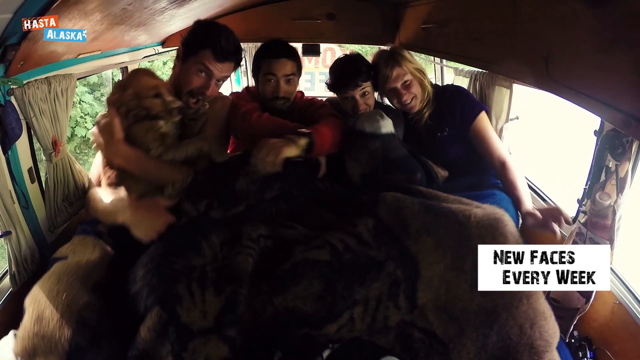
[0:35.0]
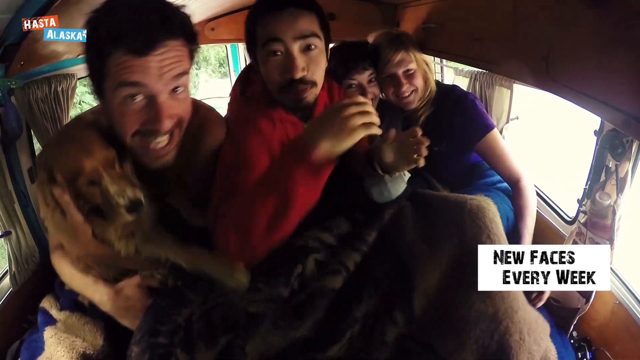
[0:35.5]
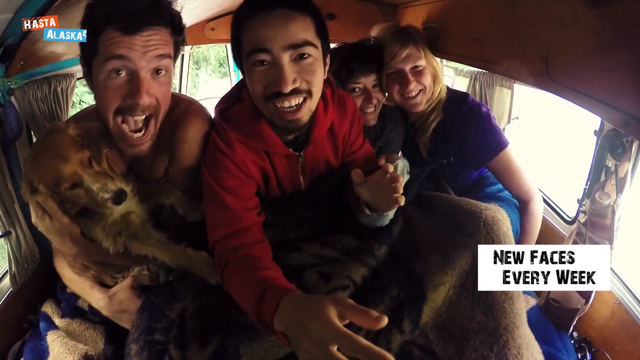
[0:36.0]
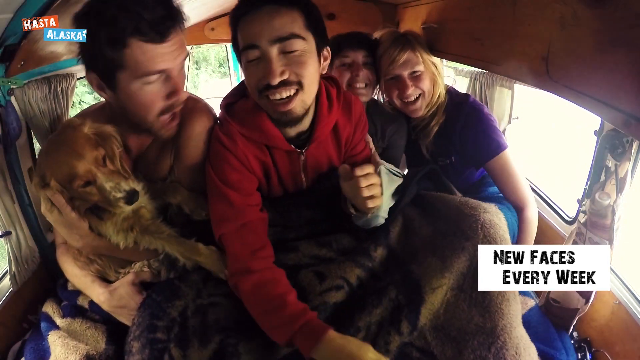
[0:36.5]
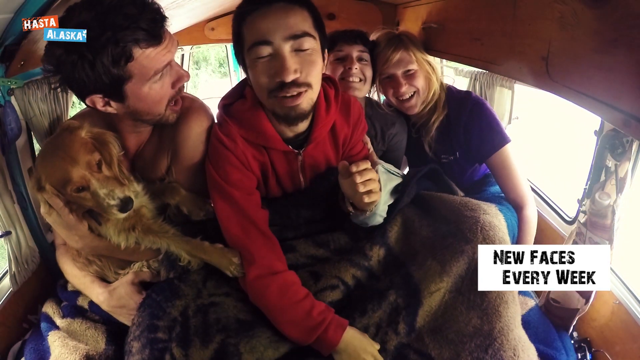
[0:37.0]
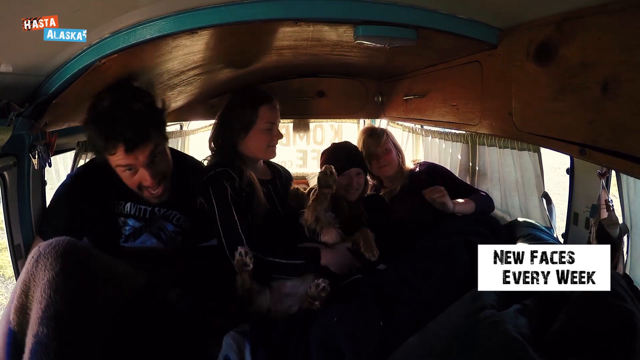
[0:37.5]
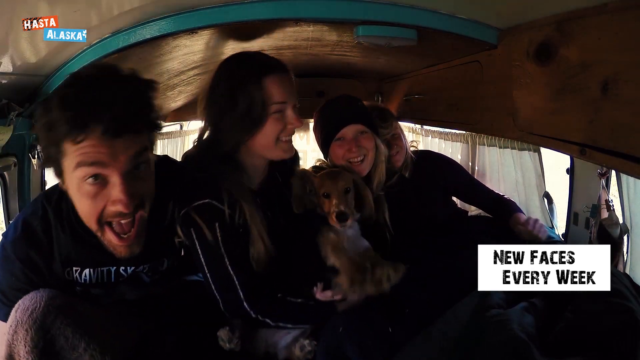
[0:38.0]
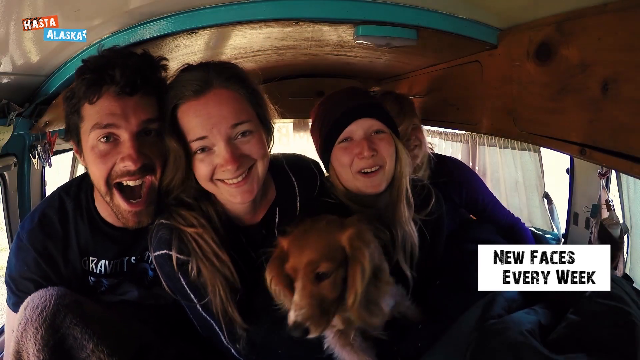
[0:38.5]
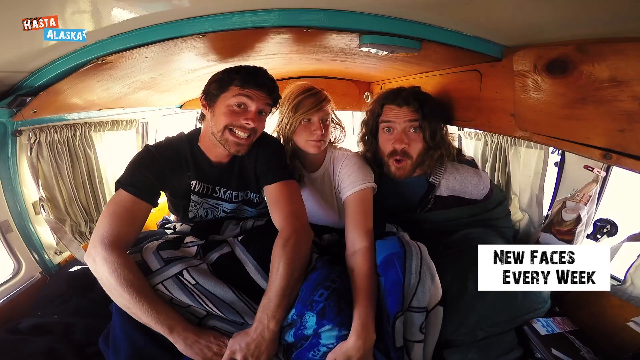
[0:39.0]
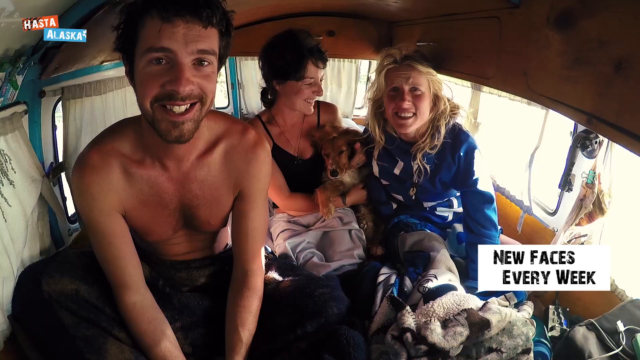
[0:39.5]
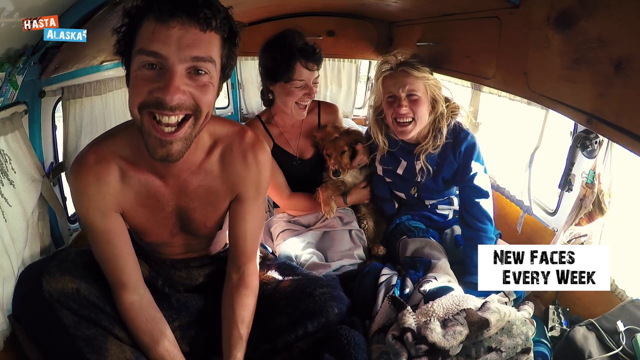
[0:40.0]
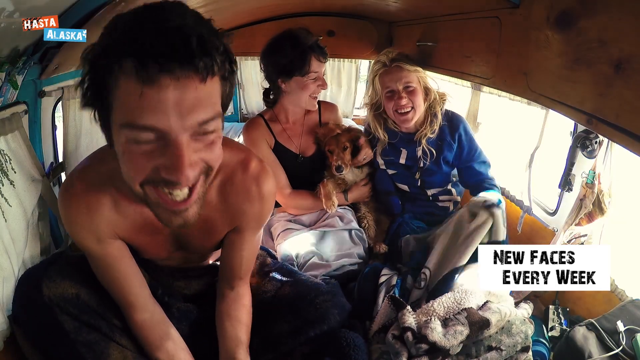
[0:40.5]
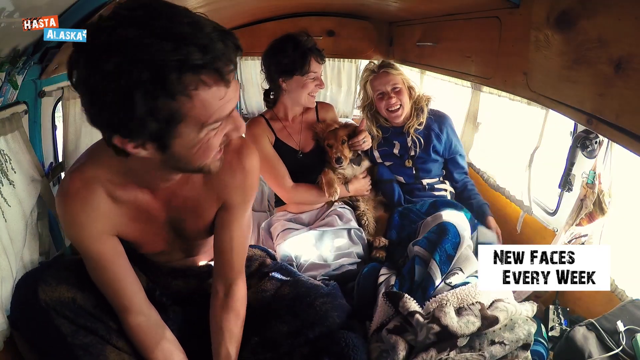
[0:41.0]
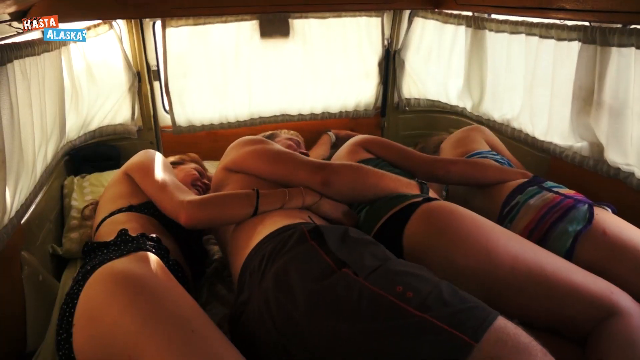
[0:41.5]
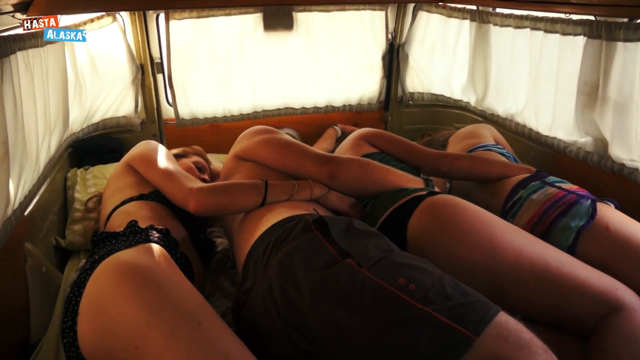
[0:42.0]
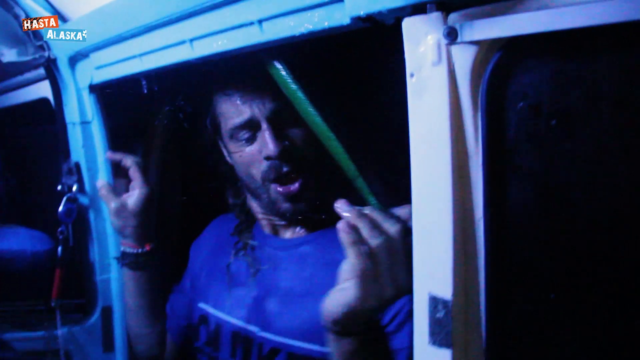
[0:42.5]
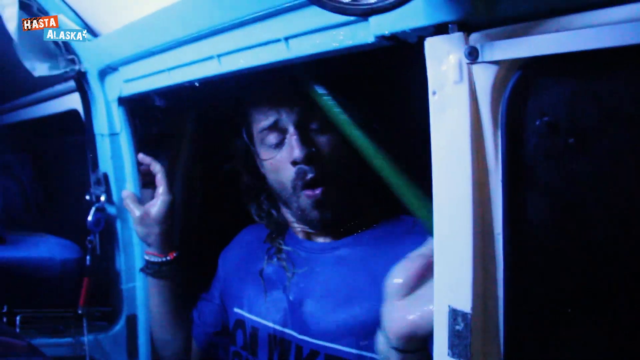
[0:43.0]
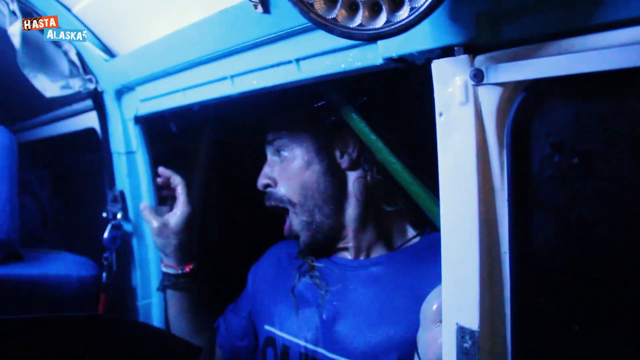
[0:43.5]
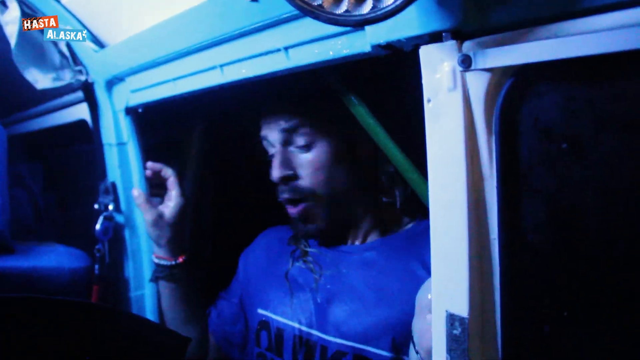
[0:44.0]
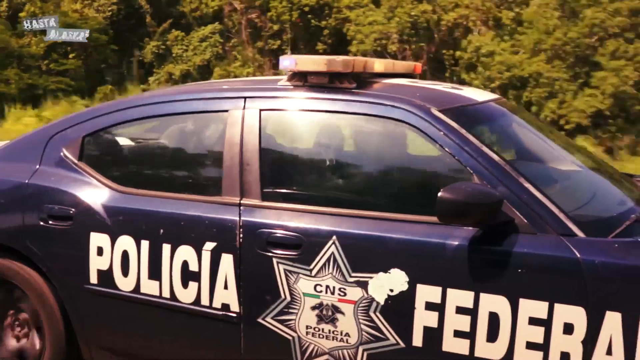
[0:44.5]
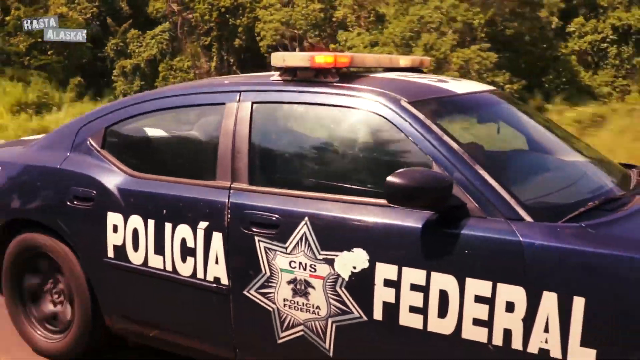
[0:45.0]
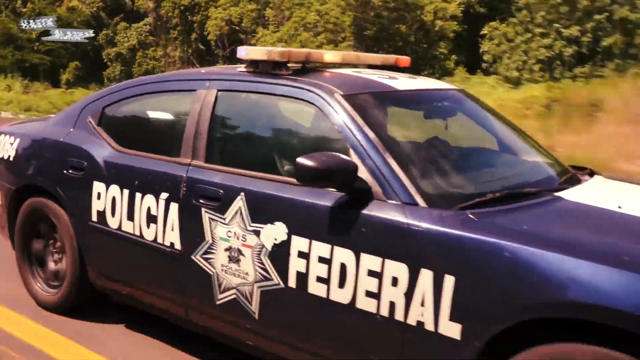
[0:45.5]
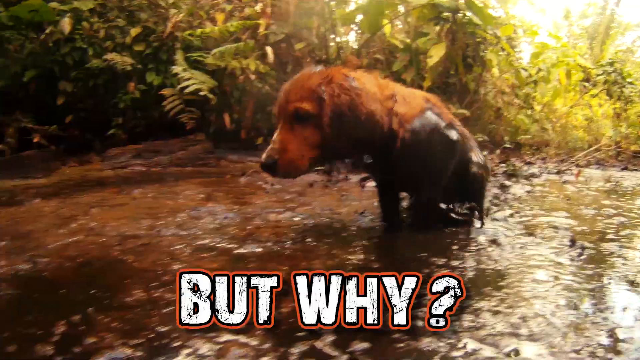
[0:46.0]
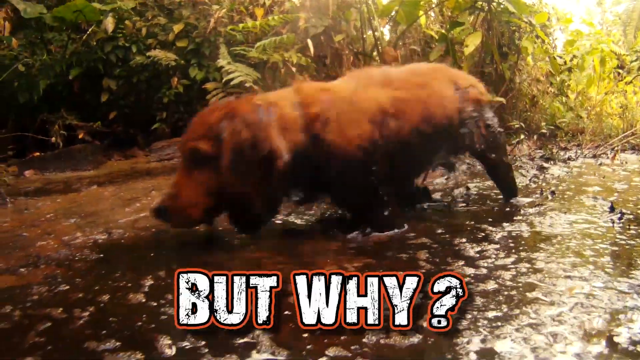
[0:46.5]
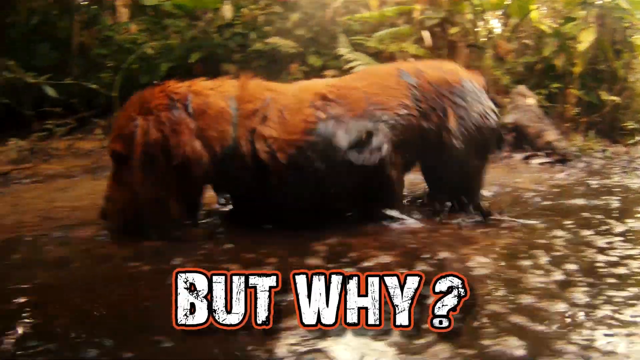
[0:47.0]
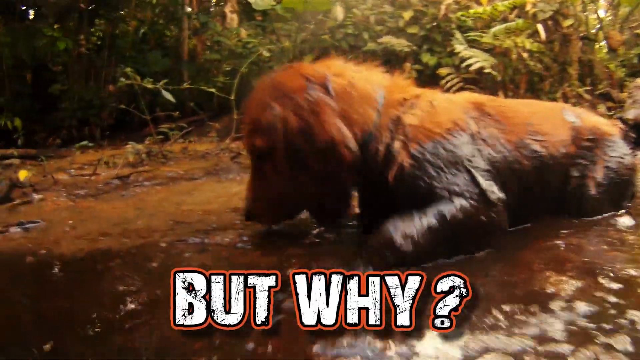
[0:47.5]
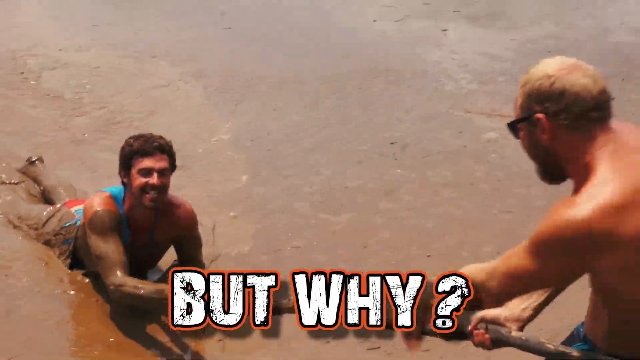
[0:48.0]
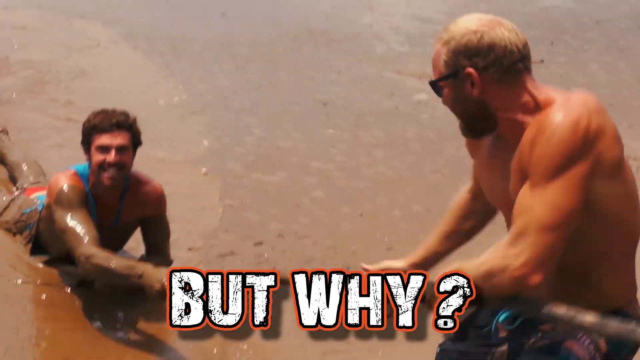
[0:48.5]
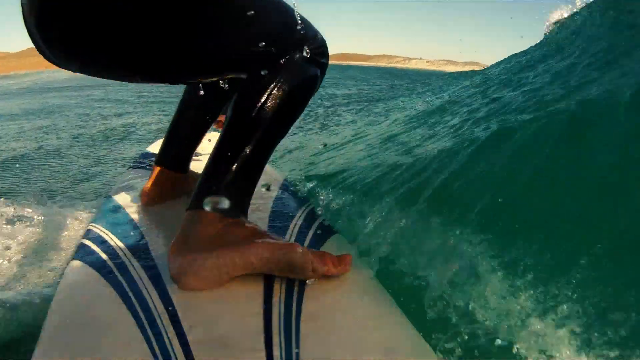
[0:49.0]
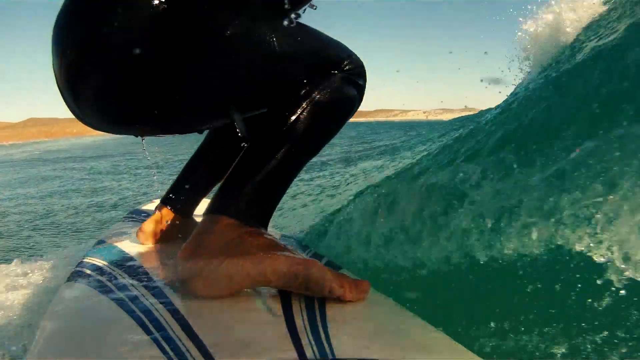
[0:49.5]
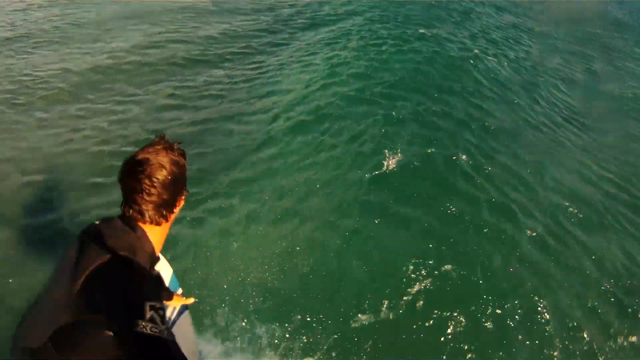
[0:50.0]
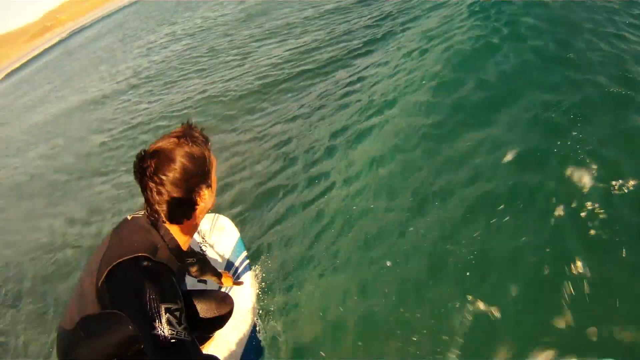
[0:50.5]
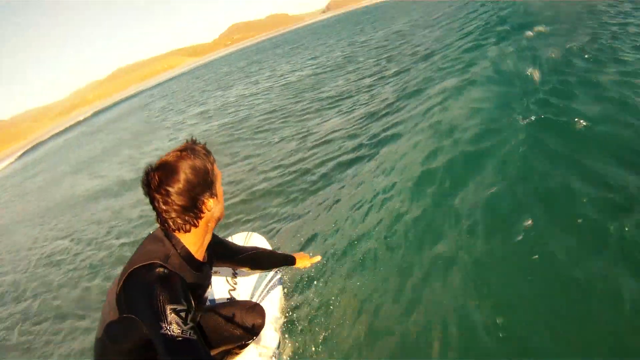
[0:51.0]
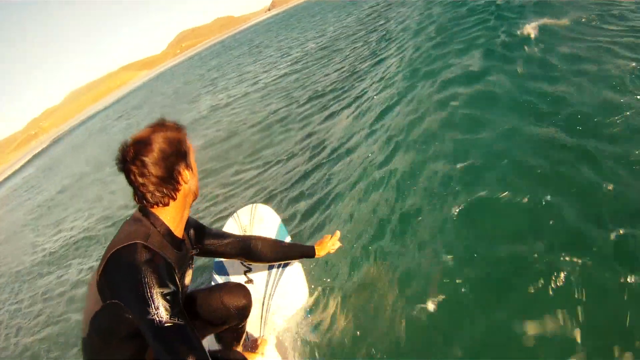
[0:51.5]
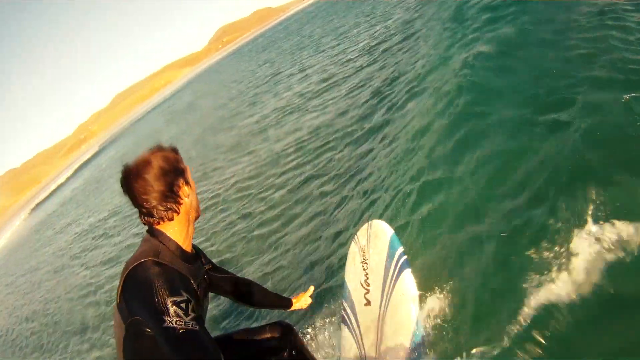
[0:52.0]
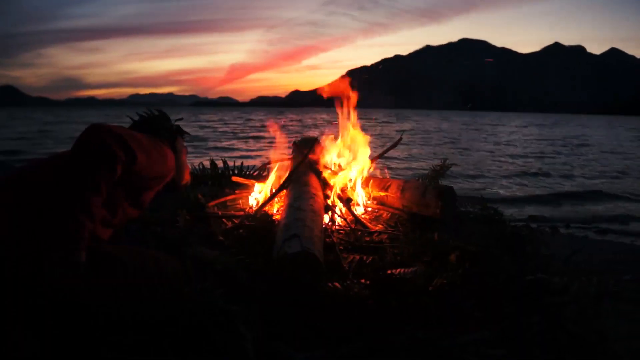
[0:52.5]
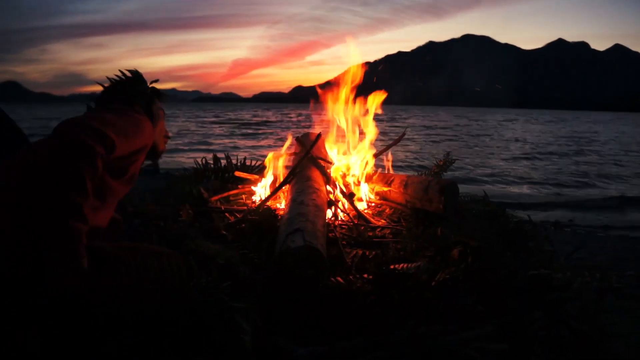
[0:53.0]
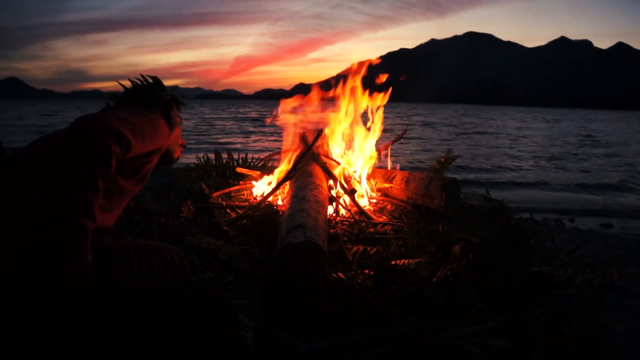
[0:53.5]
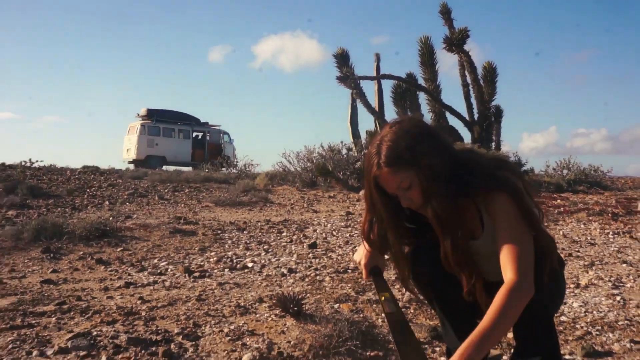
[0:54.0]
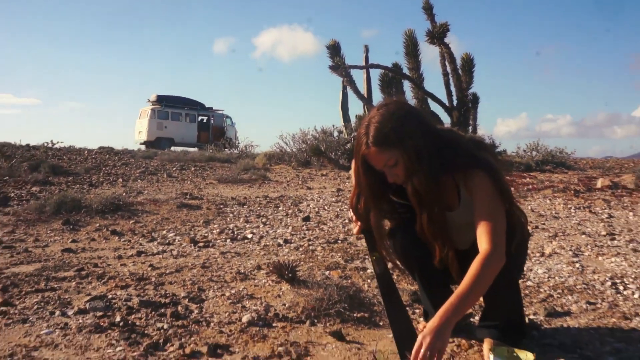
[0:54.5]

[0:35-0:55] It looks like anywhere between three and four people can sleep in the van, and it is very tight and cramped. The video shows police, Alaska in a whole bunch of mud, people surfing, a campfire at dusk, and people out in the desert digging things up. Things look kind of dirty, with lots of mud, and the conditions look kind of harsh. It looks like Ben got stuck in a rainstorm at one point.